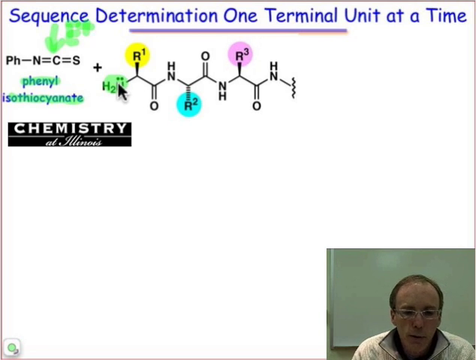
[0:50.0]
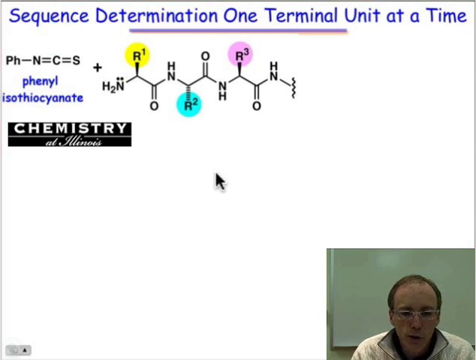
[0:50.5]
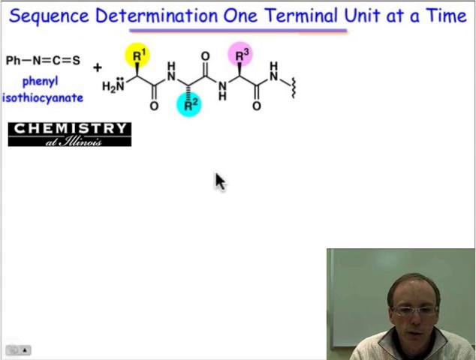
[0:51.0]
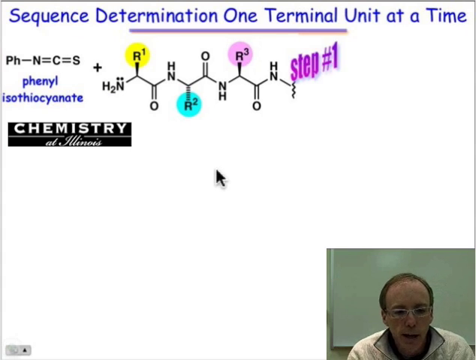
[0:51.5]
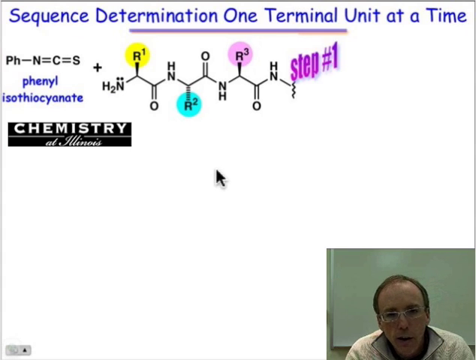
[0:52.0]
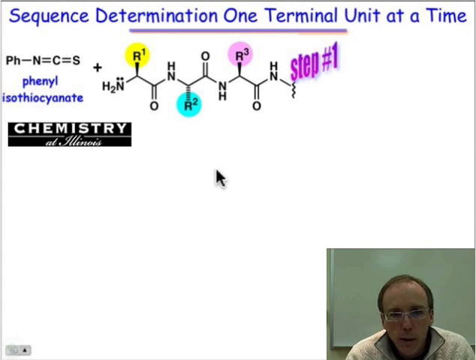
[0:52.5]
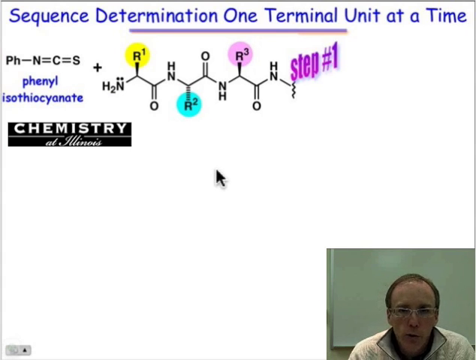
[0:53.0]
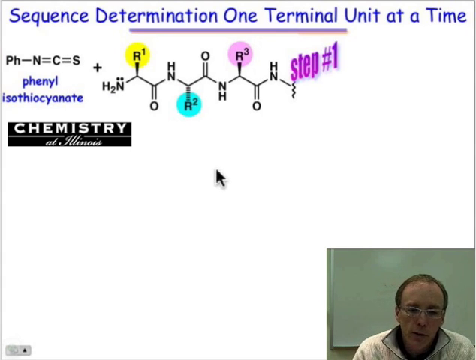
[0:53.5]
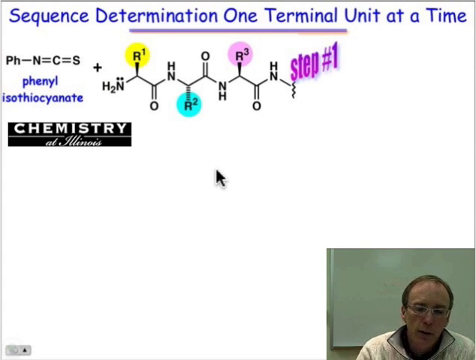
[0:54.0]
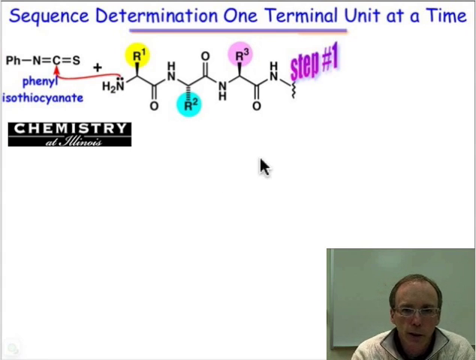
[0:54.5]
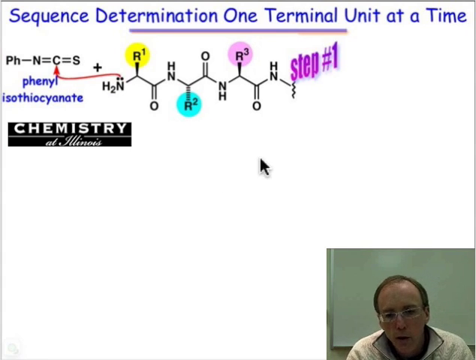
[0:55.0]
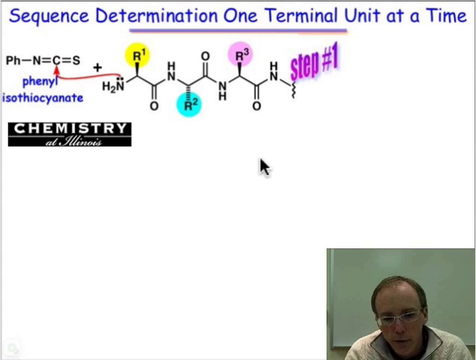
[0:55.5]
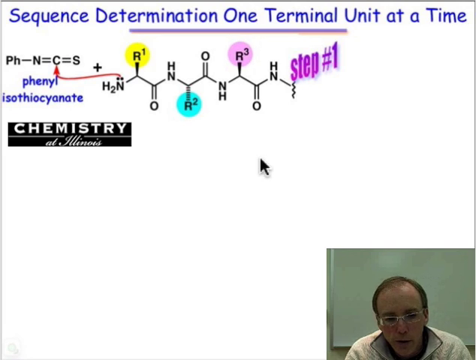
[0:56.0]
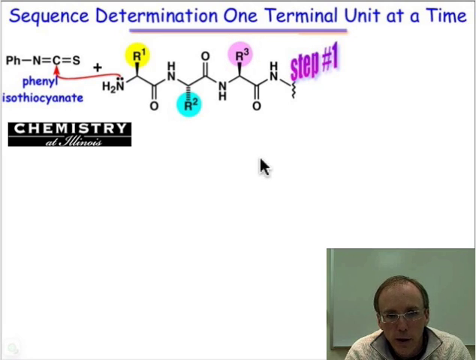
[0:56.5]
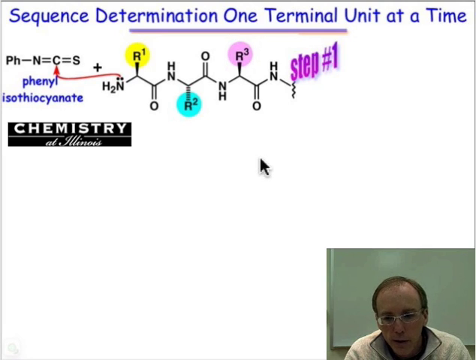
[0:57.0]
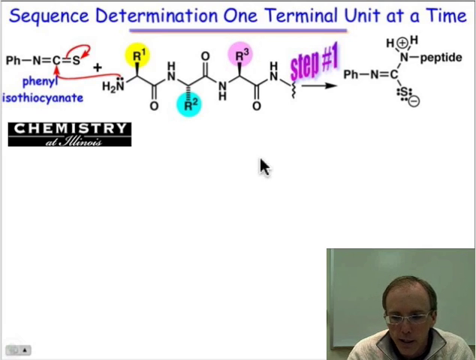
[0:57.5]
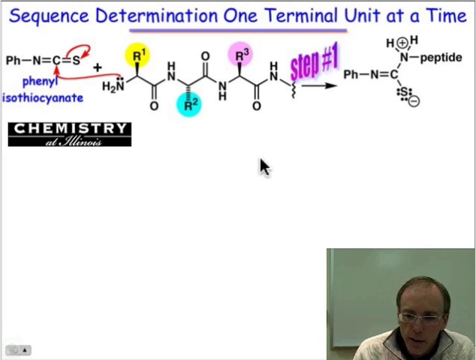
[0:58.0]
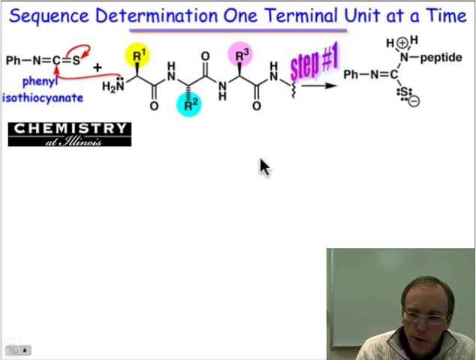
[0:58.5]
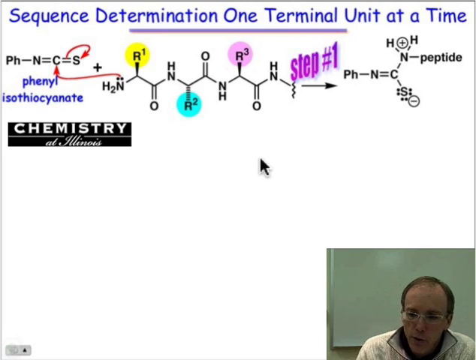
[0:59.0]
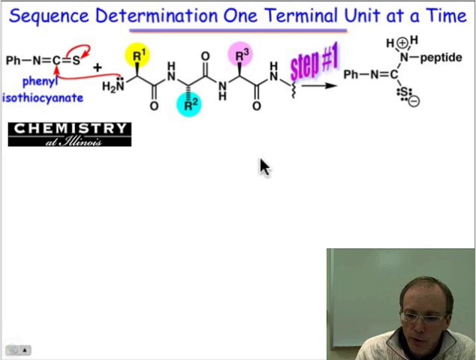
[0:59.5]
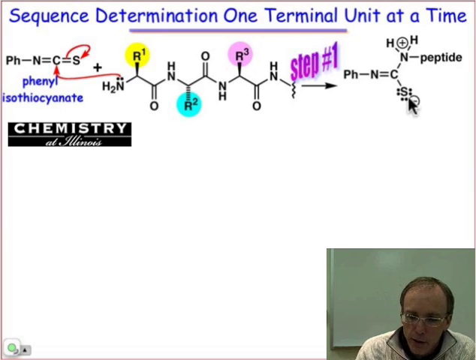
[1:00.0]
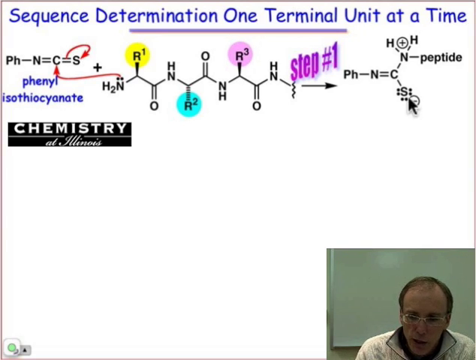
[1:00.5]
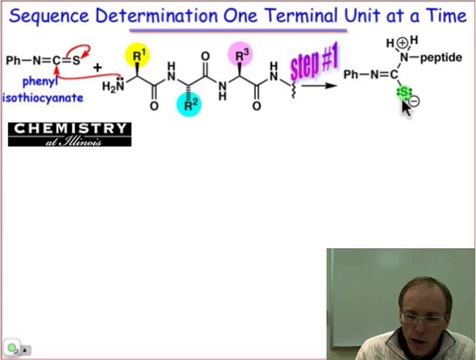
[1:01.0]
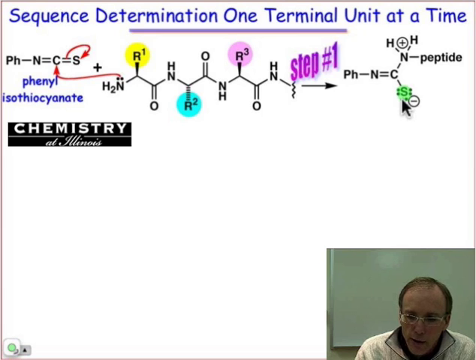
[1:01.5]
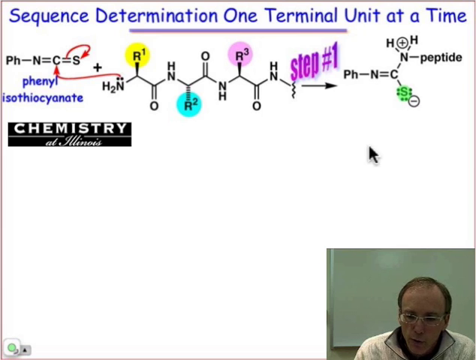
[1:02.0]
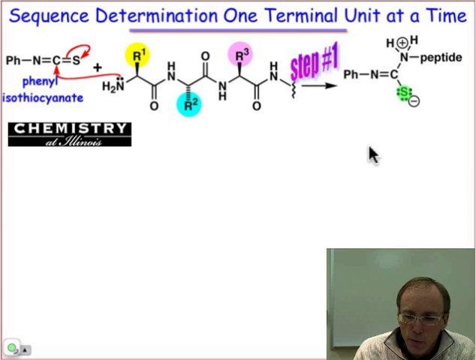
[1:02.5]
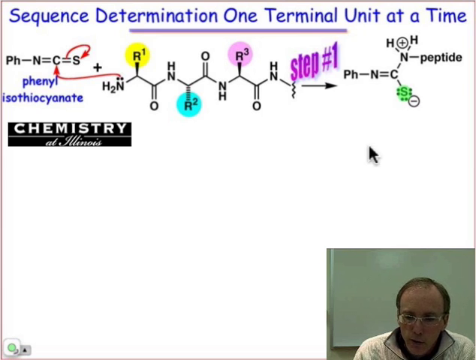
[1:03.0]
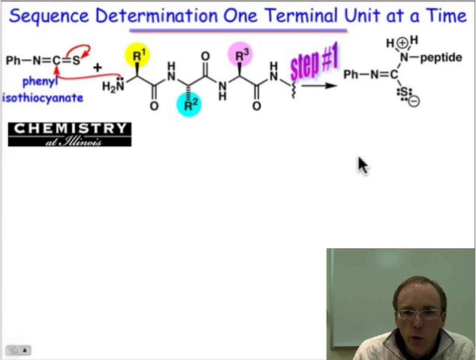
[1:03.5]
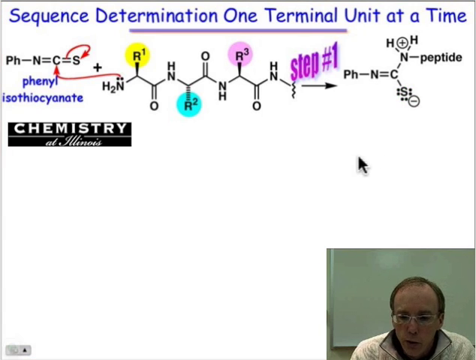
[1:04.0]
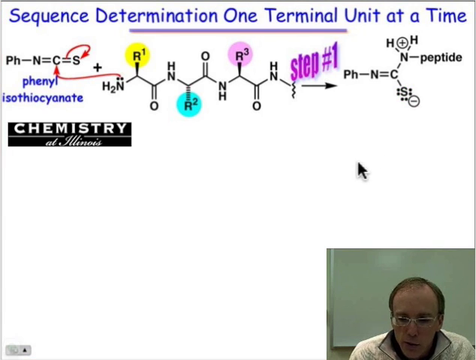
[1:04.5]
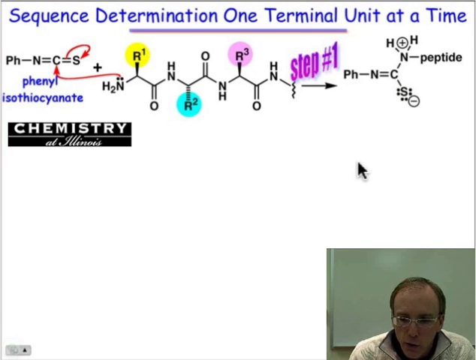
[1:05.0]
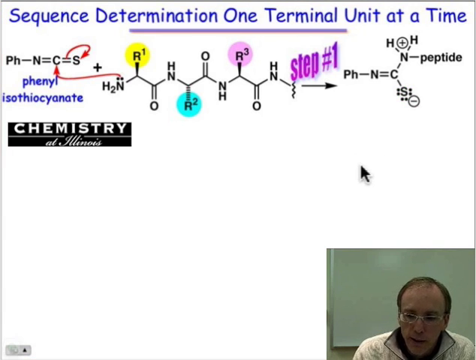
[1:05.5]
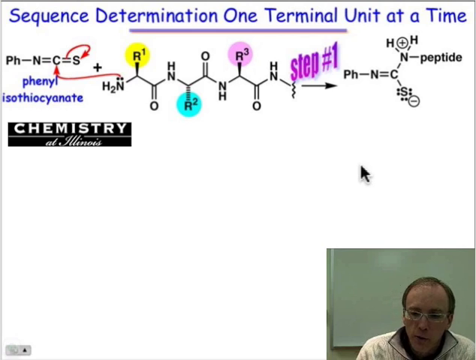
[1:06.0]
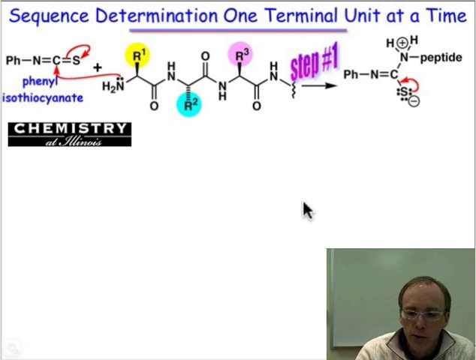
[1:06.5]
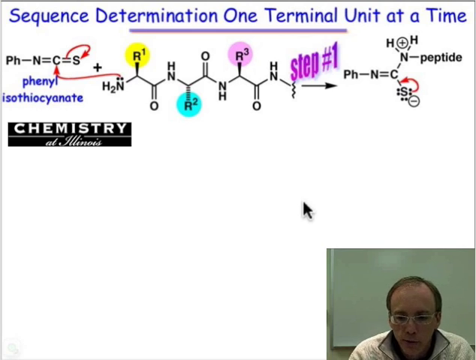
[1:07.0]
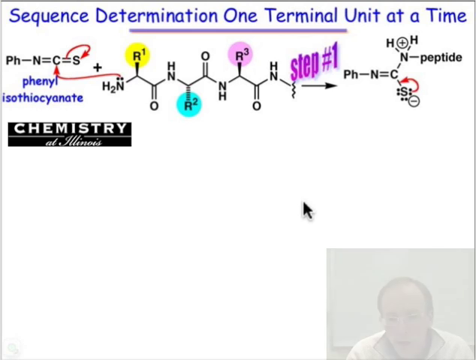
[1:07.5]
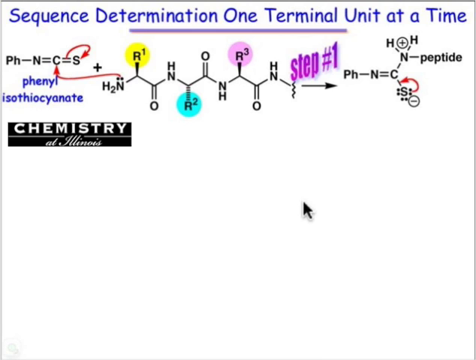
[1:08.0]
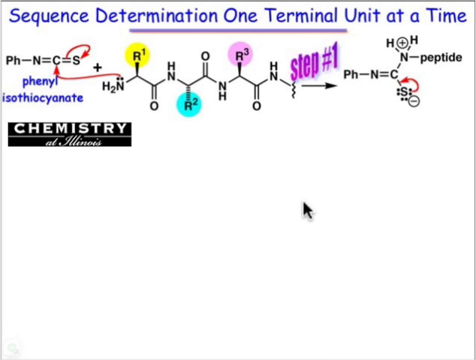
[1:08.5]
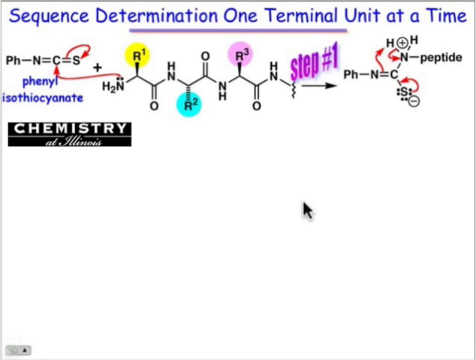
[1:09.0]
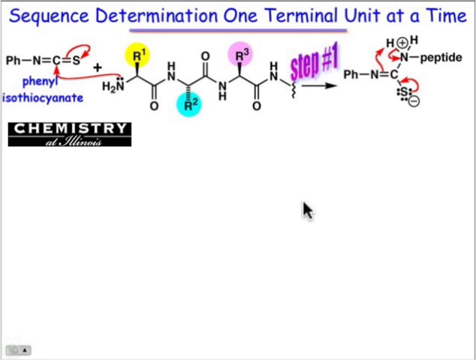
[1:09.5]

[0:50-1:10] A computer screen with a white background is shared by a professor in the bottom right corner, showing a chain sequence of phenyl isothiocyanate. The professor sits in front of a whiteboard with silver trim along the edges, visible on the left and in the lower left corner; the wall around it is light tan. He is a Caucasian male with light brown thinning hair, wearing glasses and a white pullover-type sweater. At the top of the shared screen, cobalt blue text says "sequence determination one terminal unit at a time." It is followed by a purple line in the center of the screen running from left to right. Slightly beneath that to the left is black text that says "ph-n=c=s." A little arrow written in green ink points down directly to the c. That text is followed by a plus sign and then a chain of the phenyl isothiocyanate beginning with h2, with a cursor, a small black arrow, hovering over it. The chain goes up to r1 inside a yellow circle, down to o, up to hn, down to r2 inside a blue circle, up to o, down to nh, up to r3 inside a pink circle, down to o, then up to hn. Directly beneath that to the left is a black rectangle with white text that says "chemistry at Illinois."